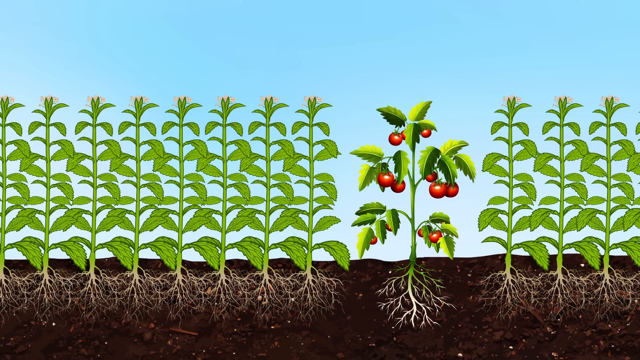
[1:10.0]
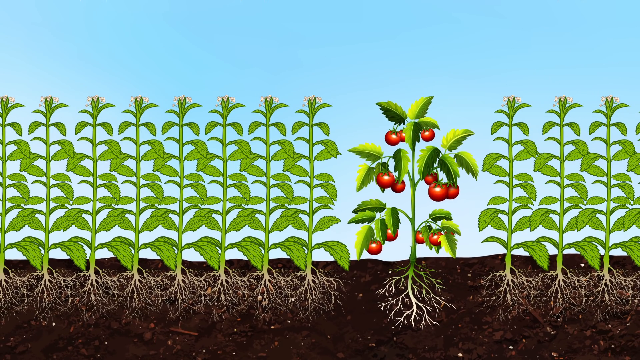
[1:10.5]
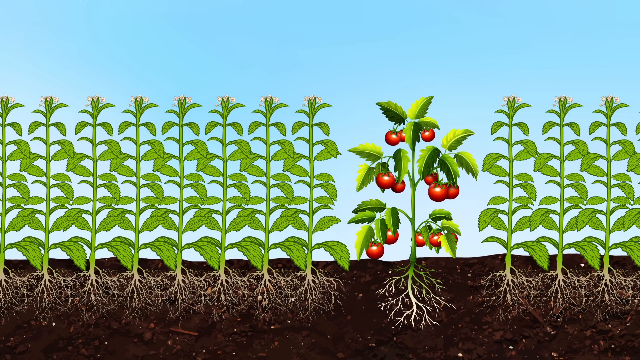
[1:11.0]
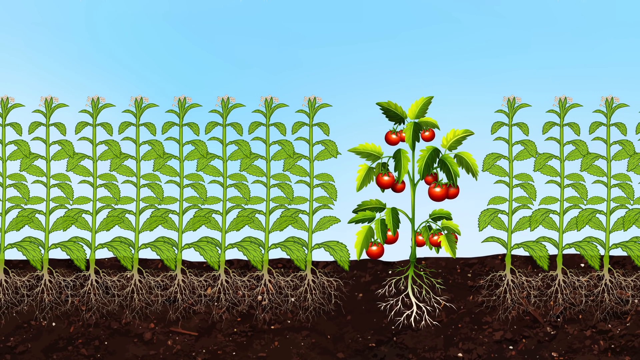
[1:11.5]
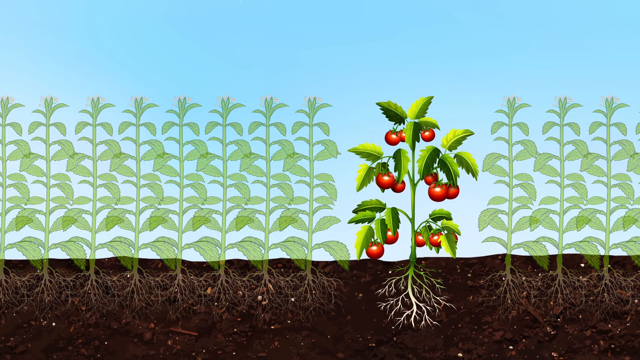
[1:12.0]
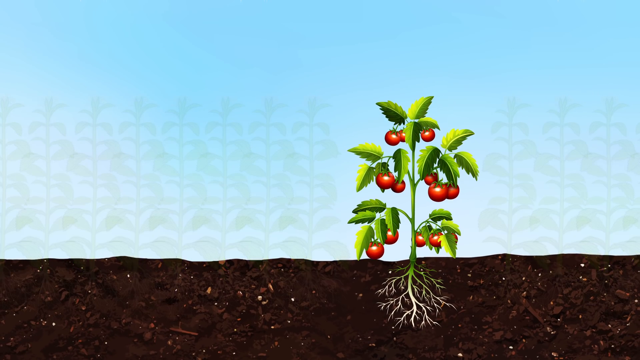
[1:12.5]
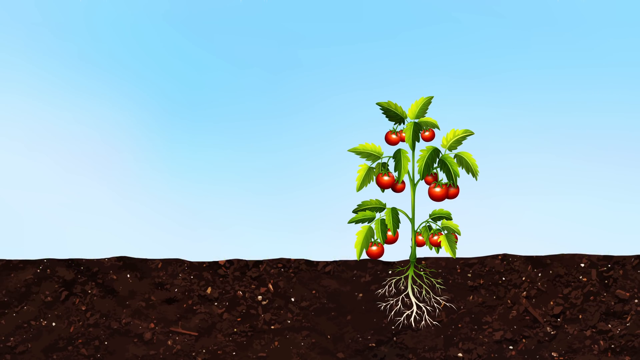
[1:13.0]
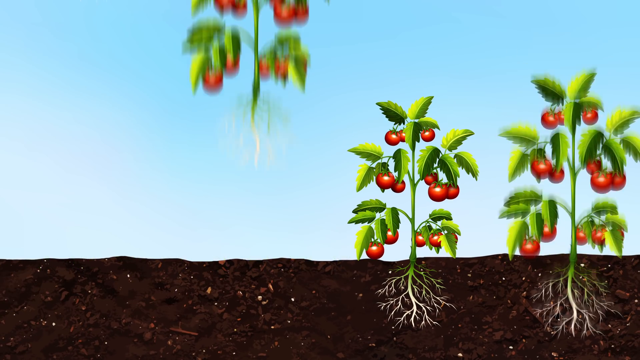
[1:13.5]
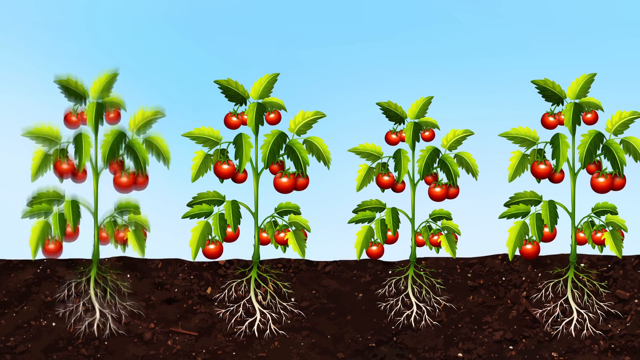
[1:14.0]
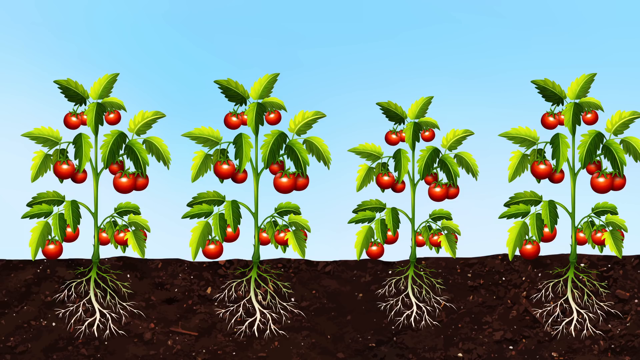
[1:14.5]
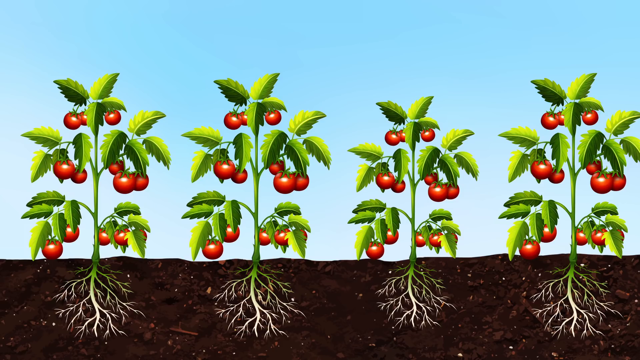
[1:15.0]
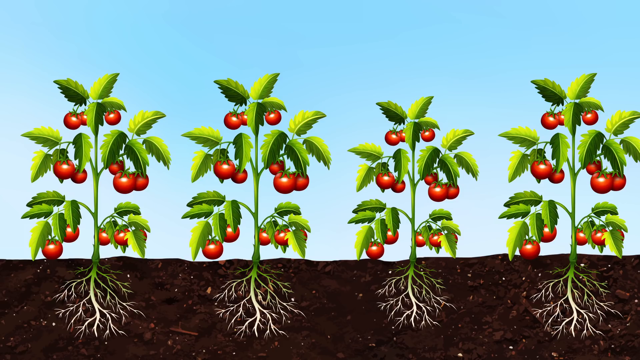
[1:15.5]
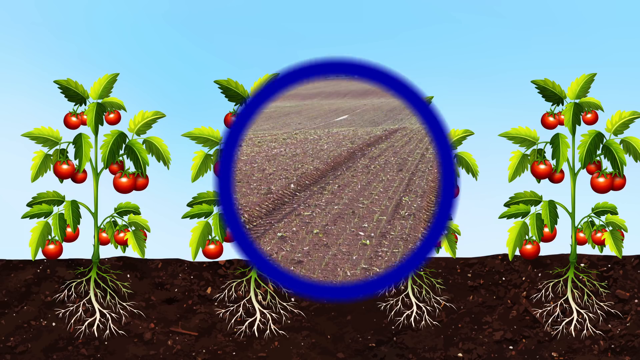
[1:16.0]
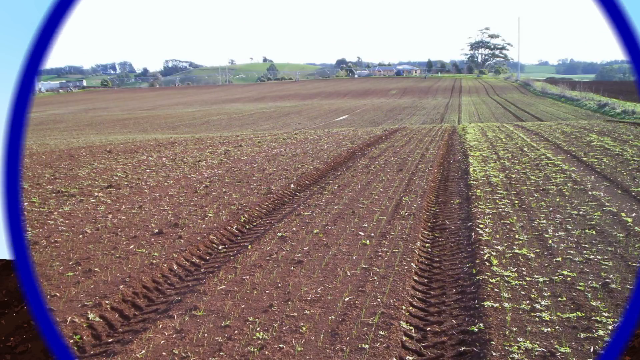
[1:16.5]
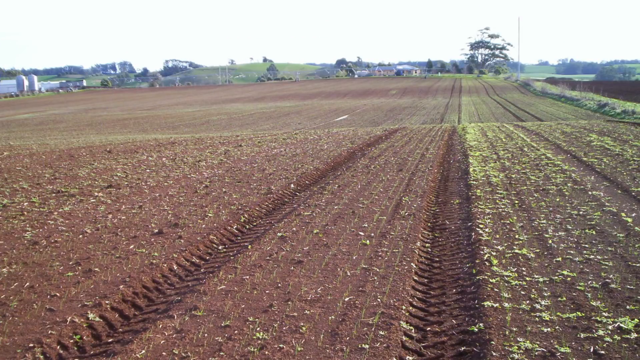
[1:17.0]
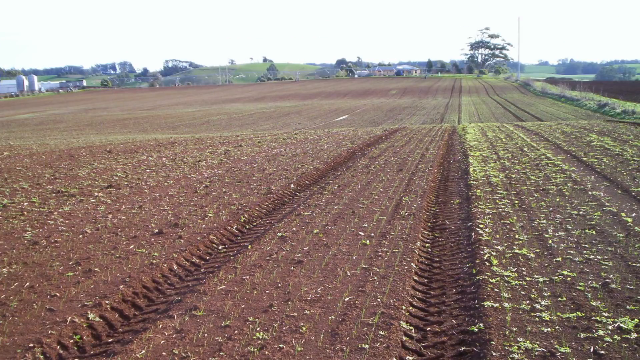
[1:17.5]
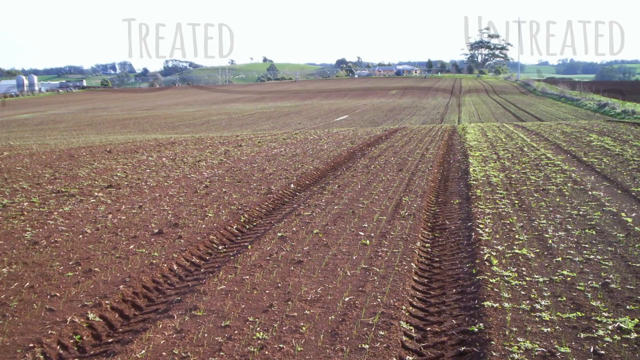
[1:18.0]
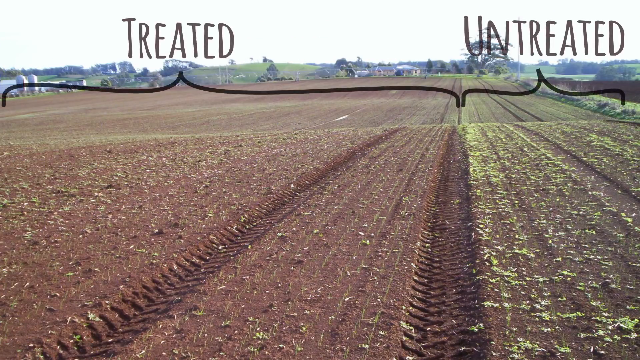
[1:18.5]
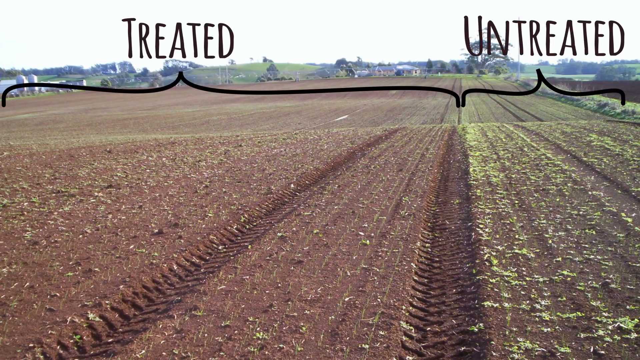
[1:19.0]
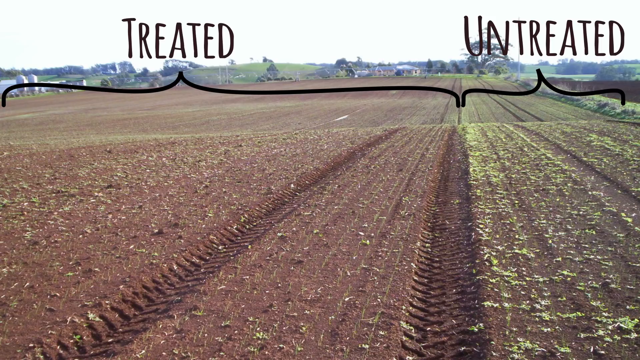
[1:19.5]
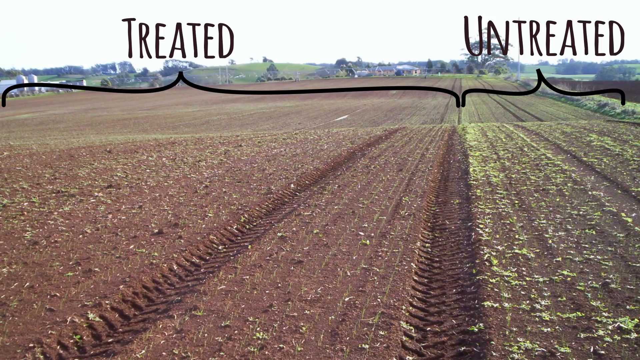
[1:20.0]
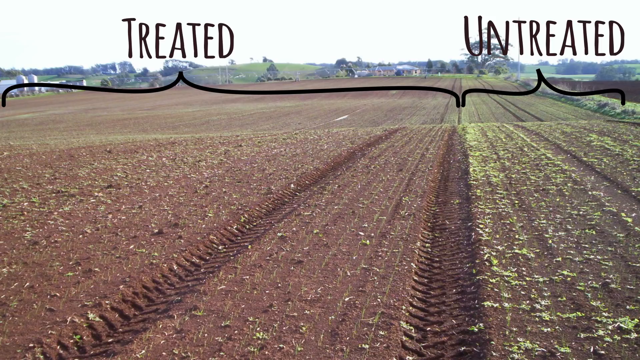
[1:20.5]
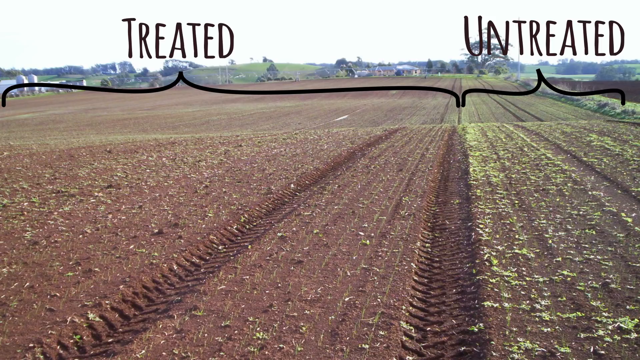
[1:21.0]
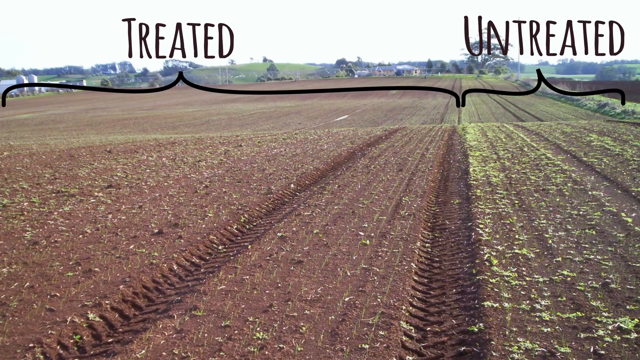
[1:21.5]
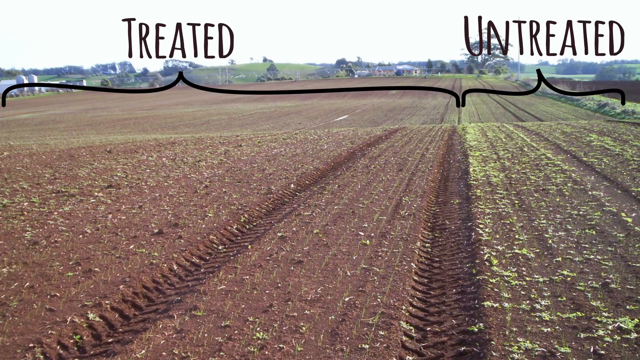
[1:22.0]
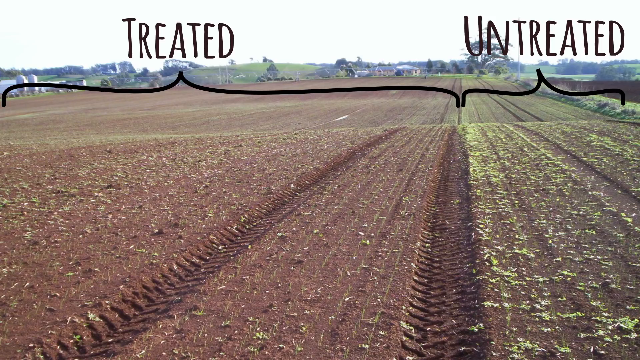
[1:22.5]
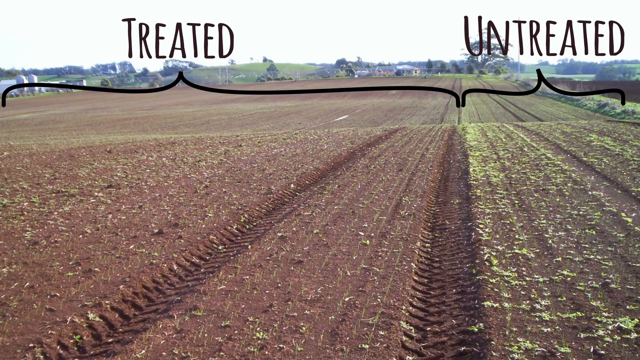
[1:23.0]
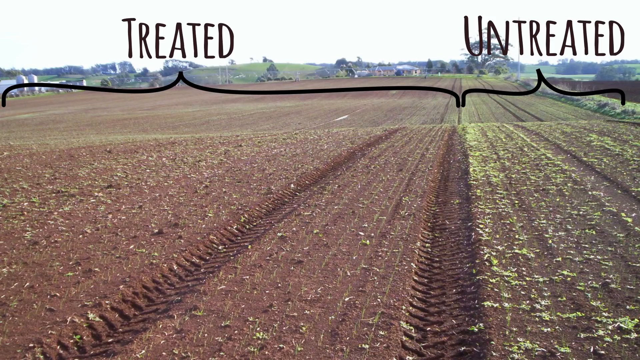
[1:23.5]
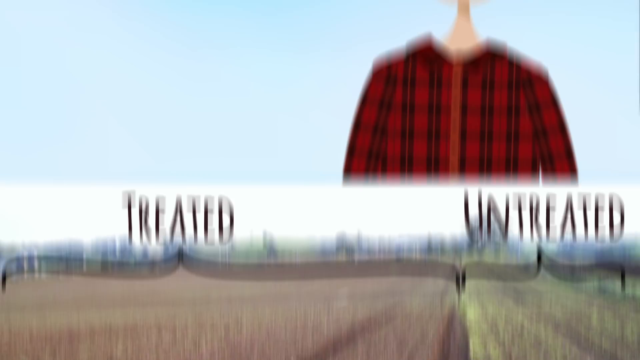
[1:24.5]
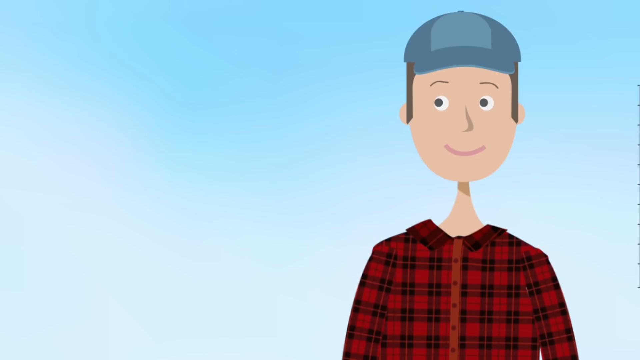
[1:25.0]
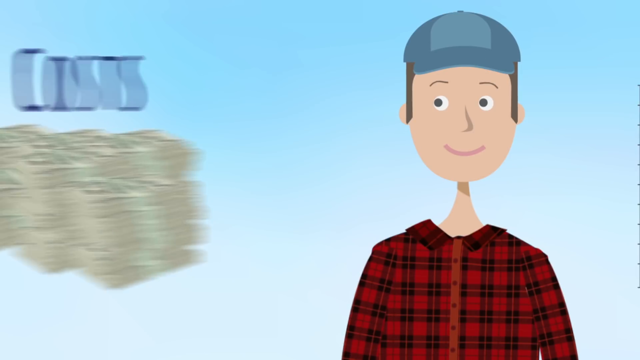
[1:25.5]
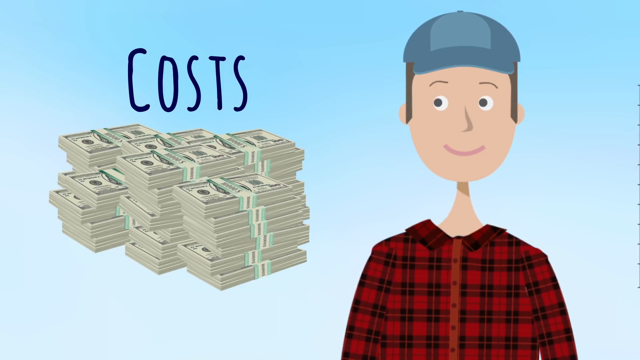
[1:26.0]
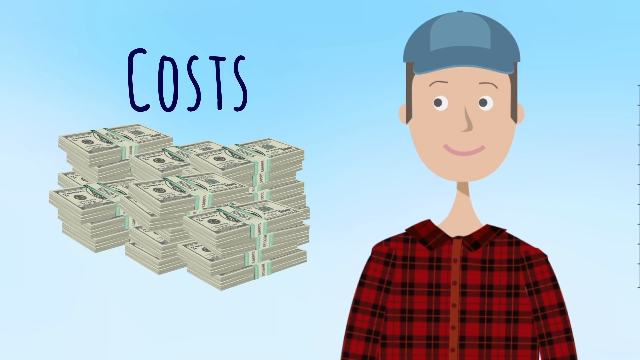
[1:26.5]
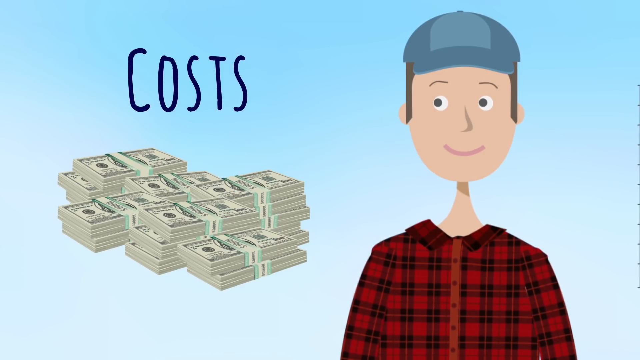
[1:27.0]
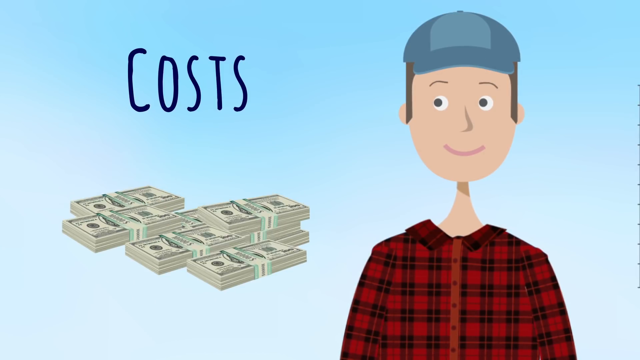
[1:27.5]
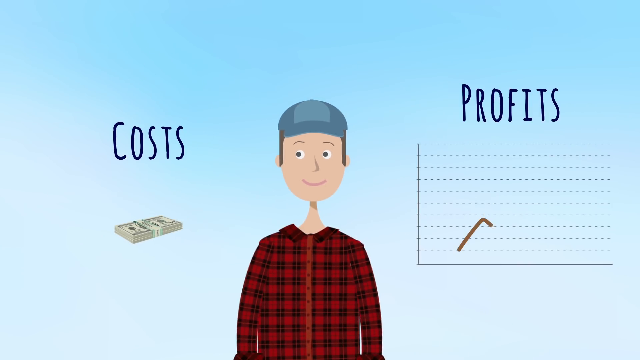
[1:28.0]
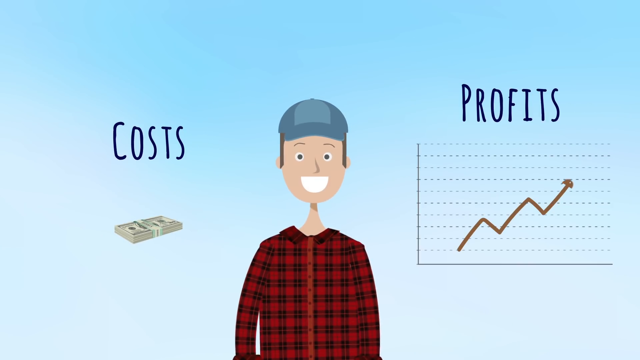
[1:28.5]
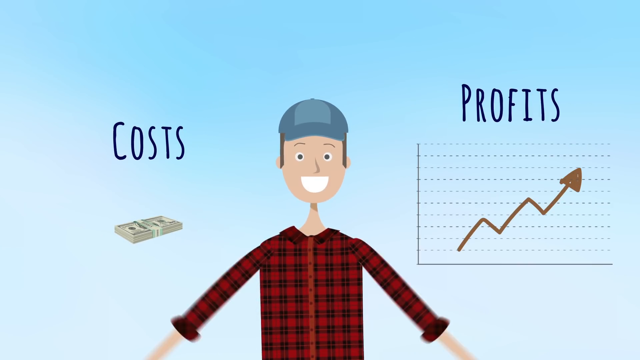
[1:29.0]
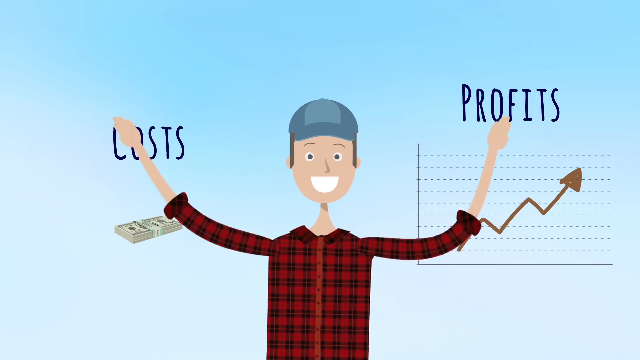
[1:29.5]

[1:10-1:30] A line of green plants sticks up out of the brown soil at the bottom of the frame, with what appear to be roots coming from the bottom and blue sky behind the plants. In the middle is a larger plant that looks to have small red tomatoes hanging from it. The plants on either side of the tomato plant disappear, and more plants like the tomato plant appear, with their roots visible as well. A blue circle appears in the center of the screen and changes the image to what looks like a dirt field with some farm area in the background. The words "Treated" and "Untreated" pop up over areas of the dirt. The image then changes to a cartoon-looking man on a blue background. On his left are stacks of money with "Cost" above them, and the money slowly goes down while the man seems to be smiling. On the right side is a graph with "Profits" above it, and it appears that as the graph goes up, the man smiles and is happy.